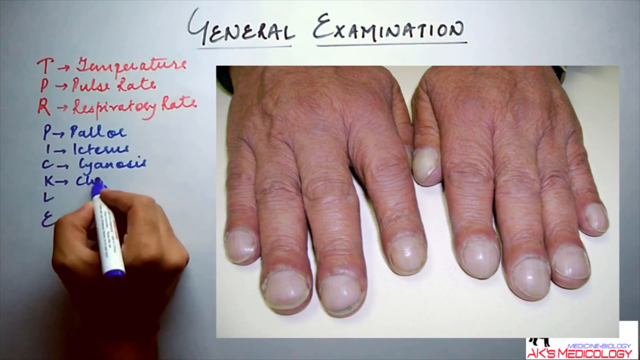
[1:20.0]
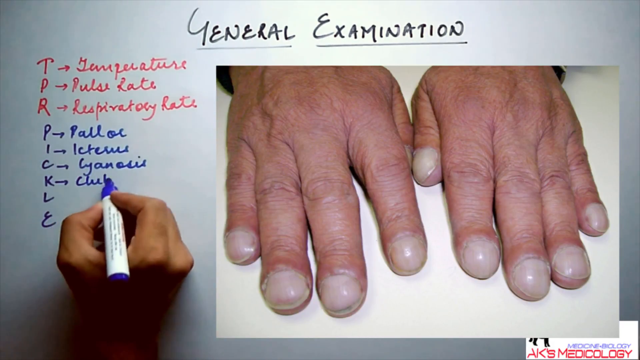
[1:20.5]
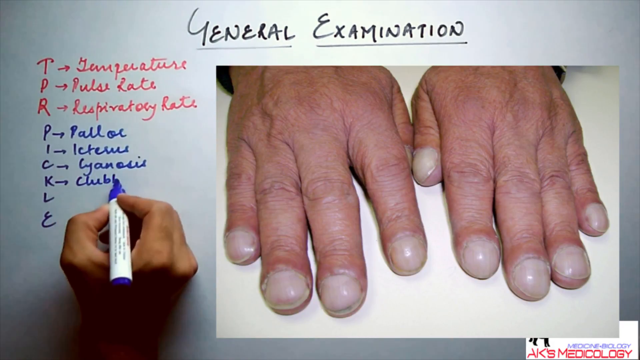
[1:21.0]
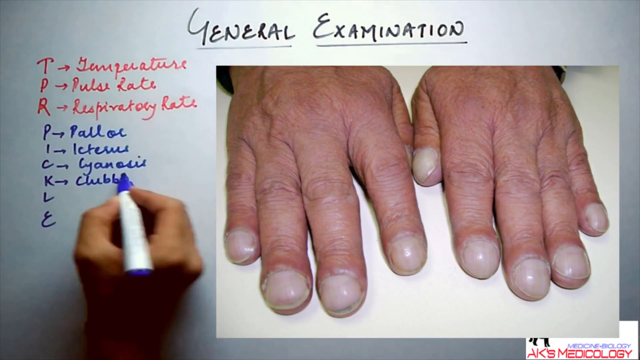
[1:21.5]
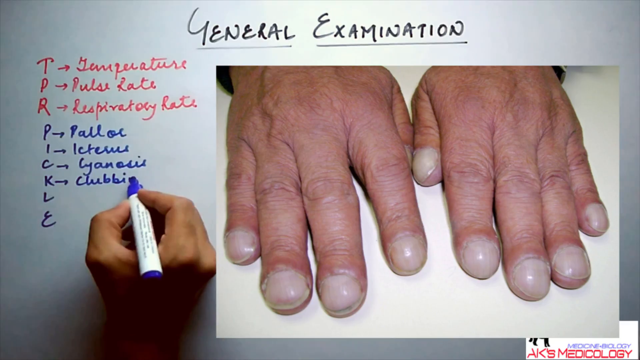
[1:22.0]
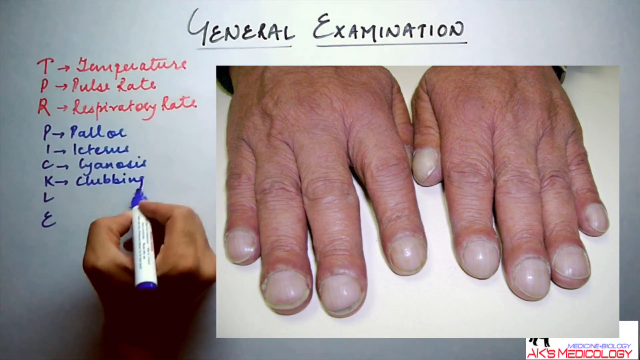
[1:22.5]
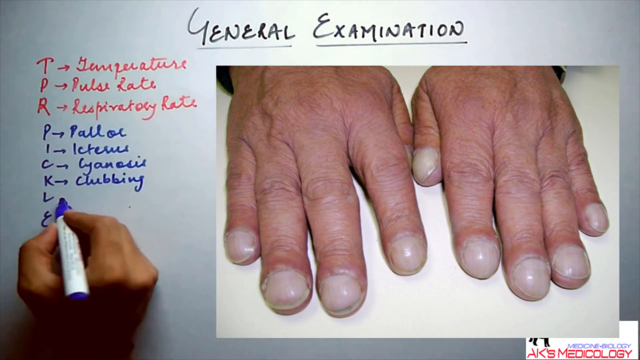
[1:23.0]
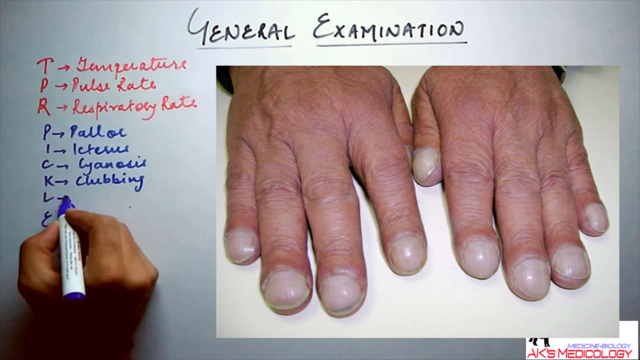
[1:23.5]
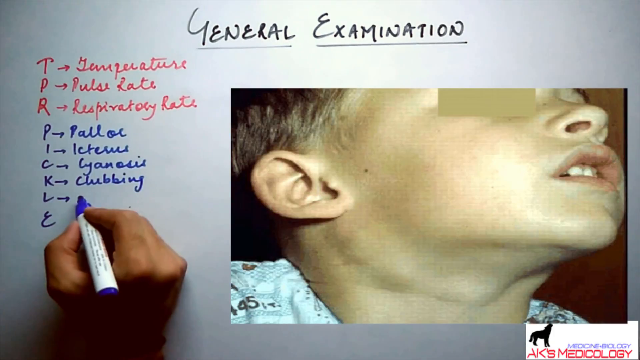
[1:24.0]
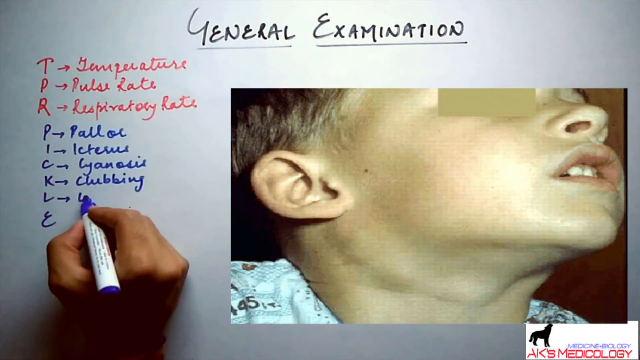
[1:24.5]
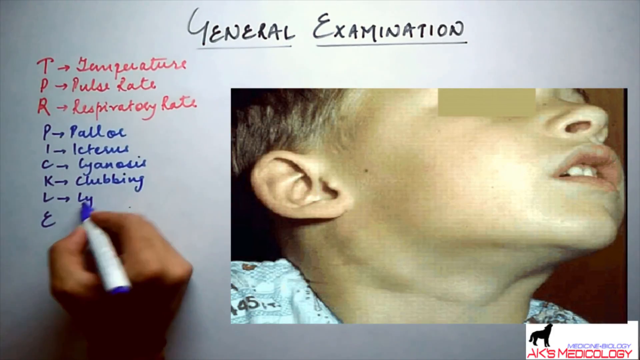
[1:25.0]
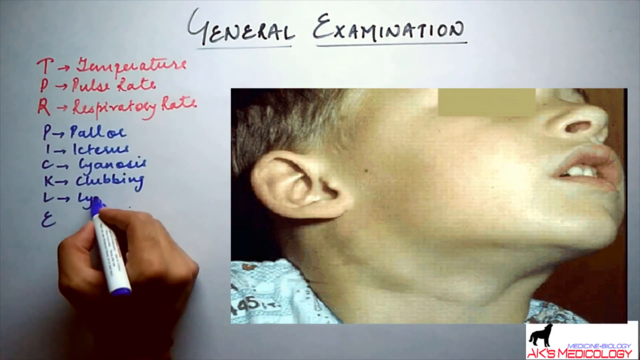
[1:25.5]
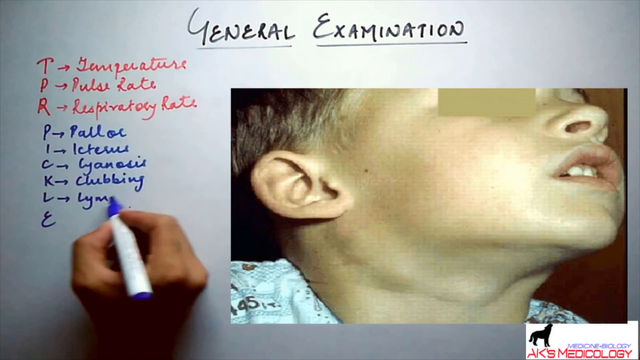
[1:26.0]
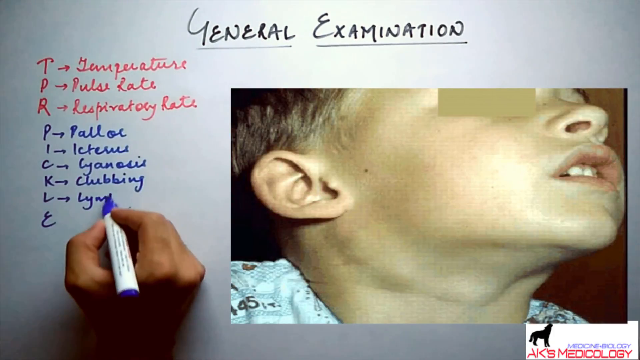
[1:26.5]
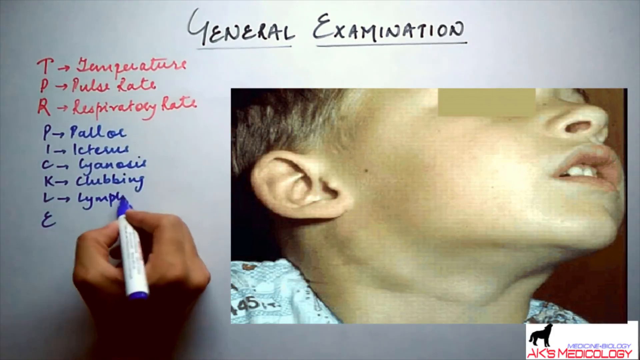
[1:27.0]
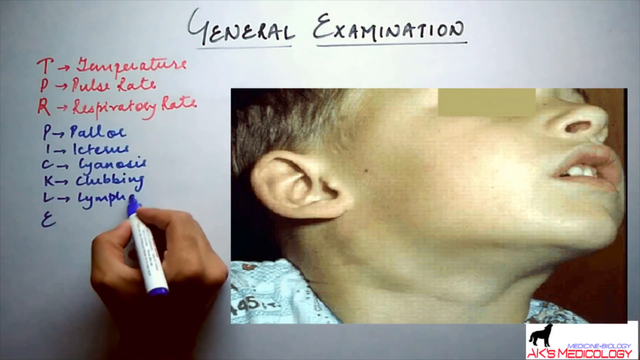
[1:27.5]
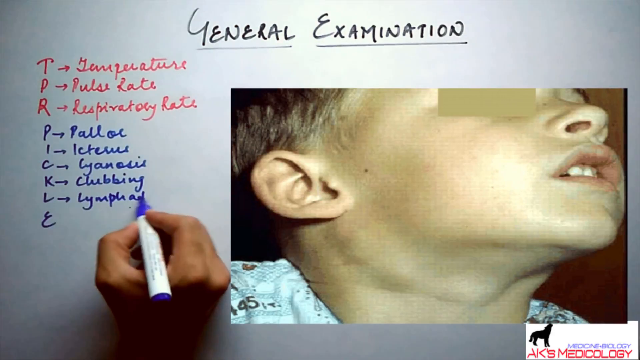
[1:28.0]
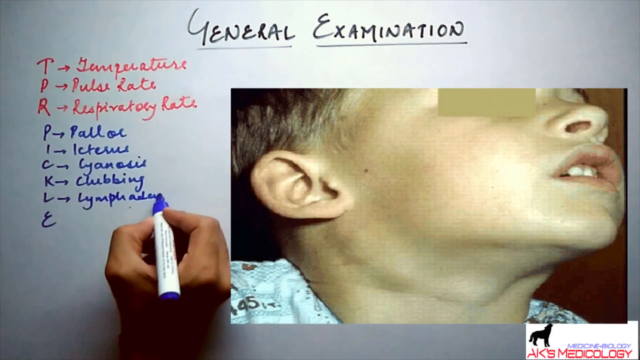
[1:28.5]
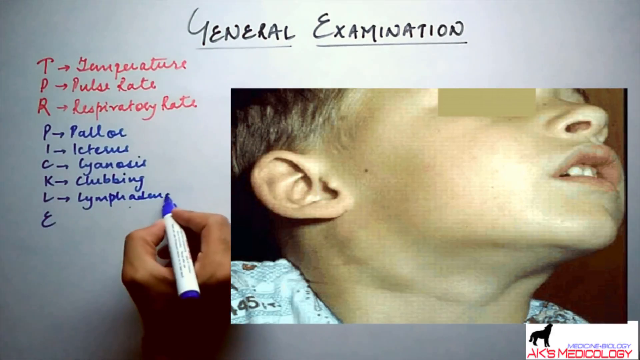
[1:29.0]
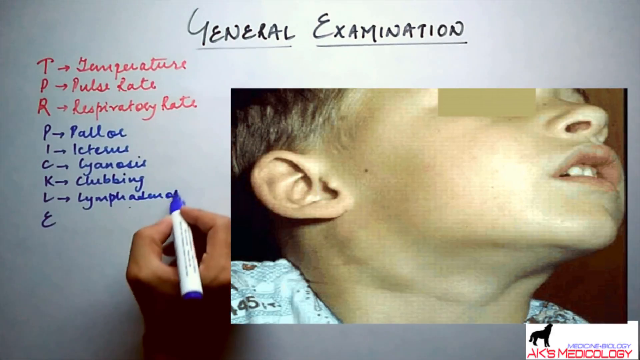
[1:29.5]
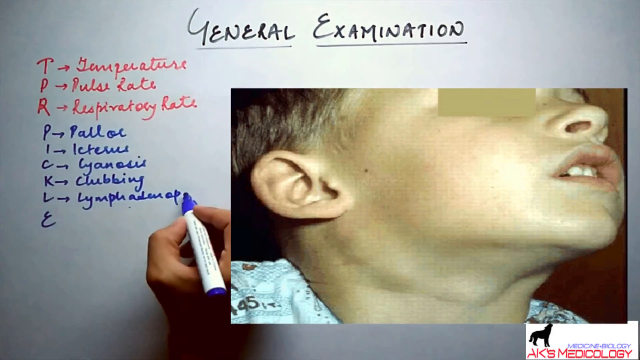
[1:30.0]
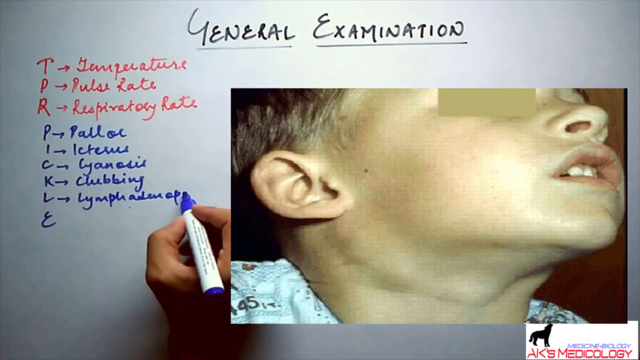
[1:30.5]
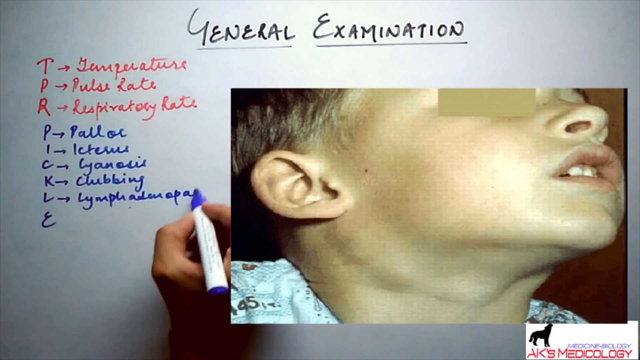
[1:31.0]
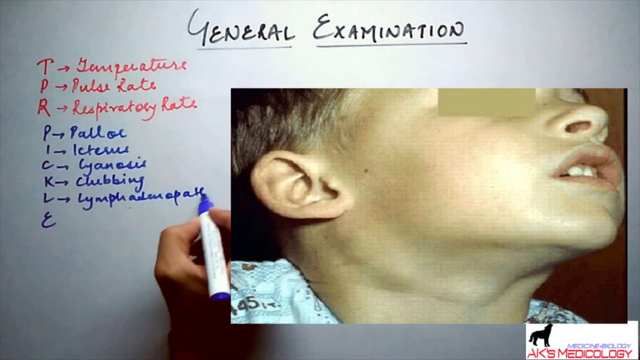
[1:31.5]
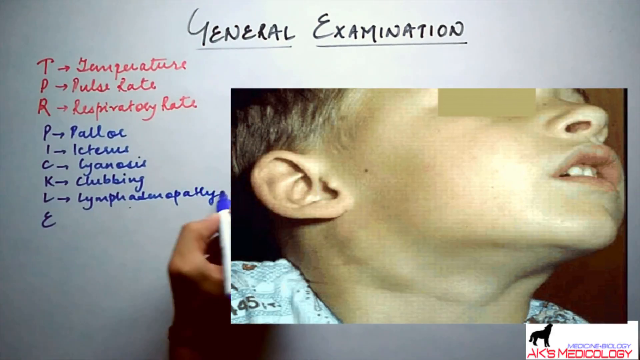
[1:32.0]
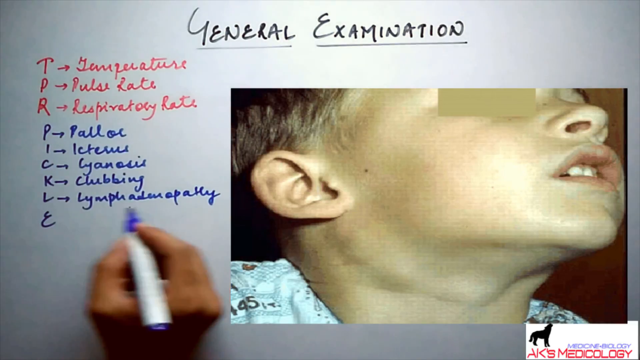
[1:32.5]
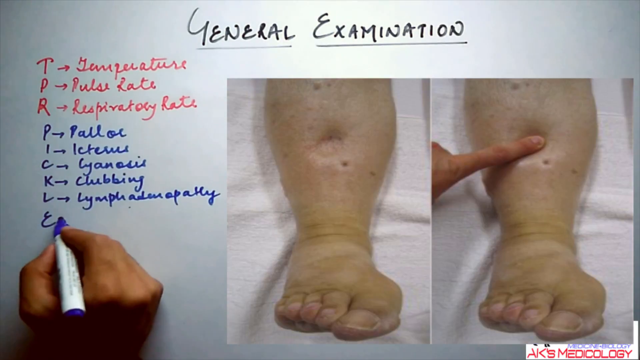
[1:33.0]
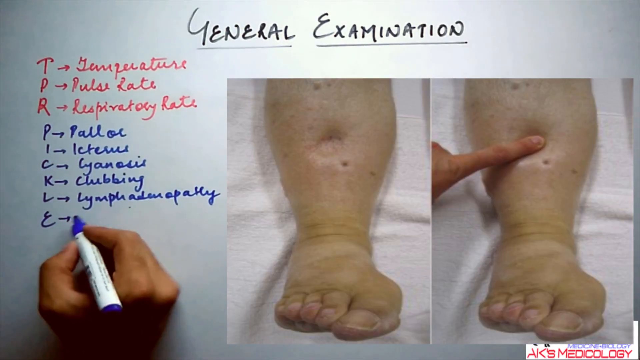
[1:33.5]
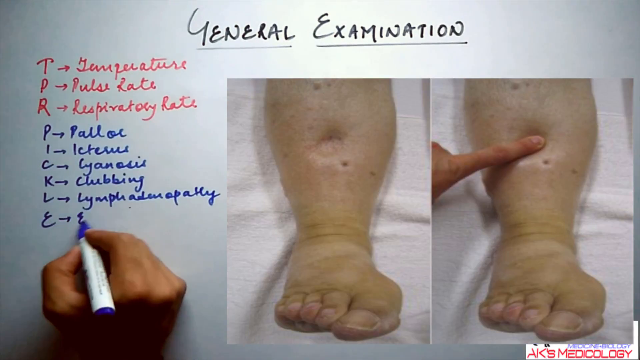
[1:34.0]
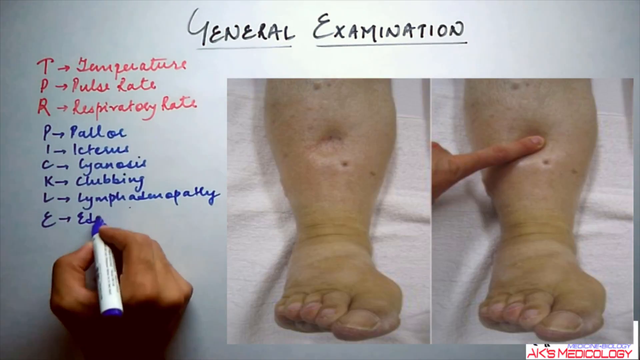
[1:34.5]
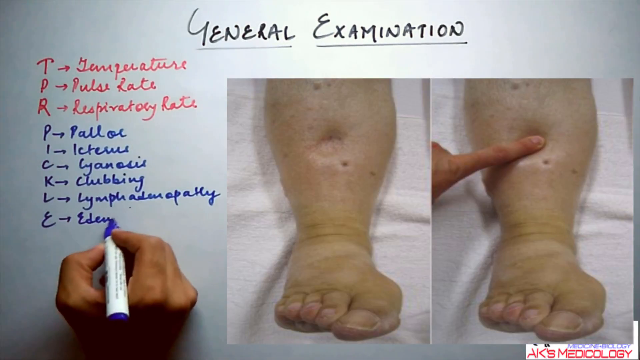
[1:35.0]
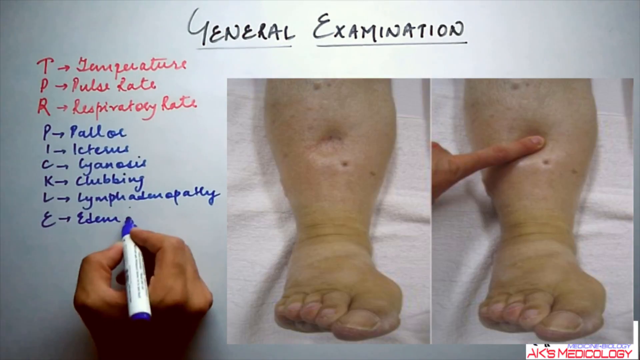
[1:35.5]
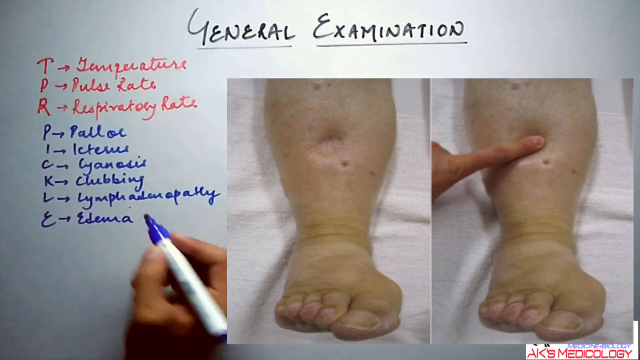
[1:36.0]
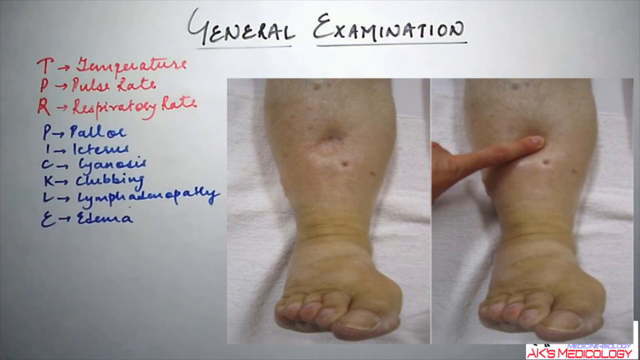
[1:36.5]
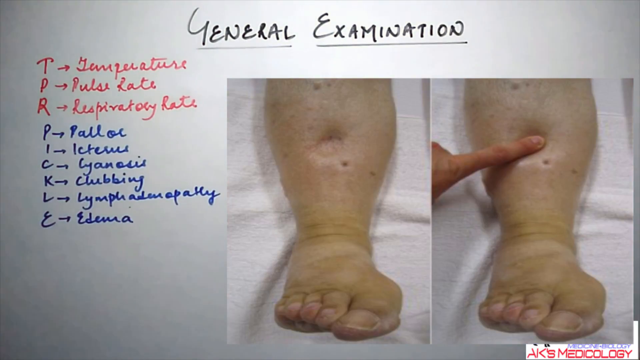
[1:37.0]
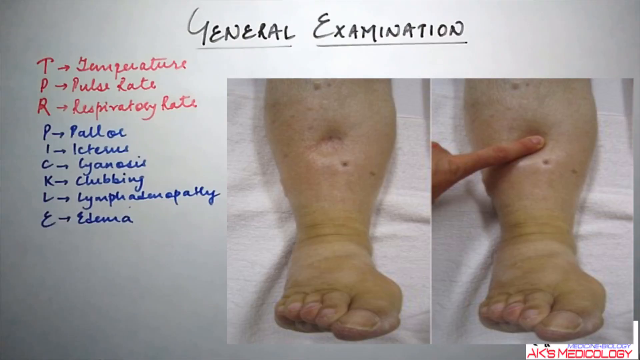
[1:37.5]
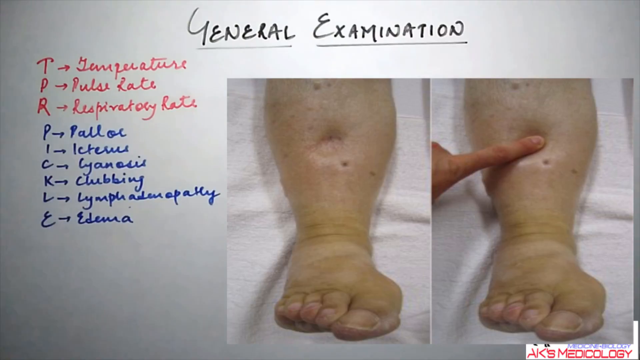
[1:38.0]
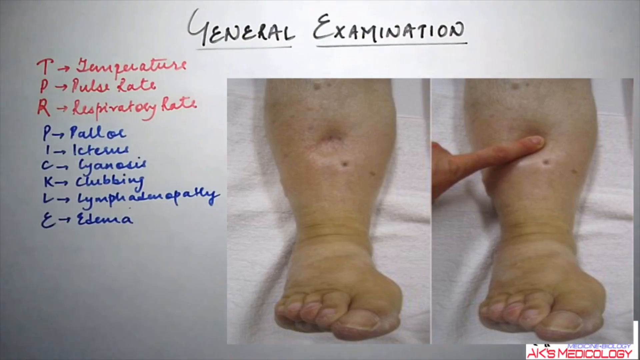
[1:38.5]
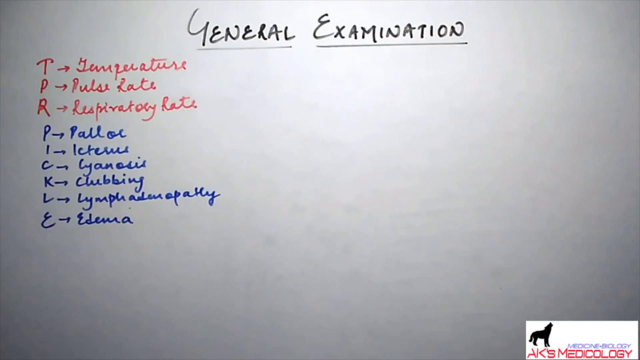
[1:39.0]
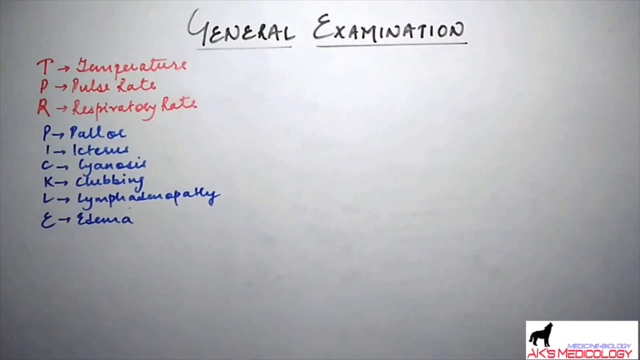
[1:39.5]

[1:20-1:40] The white board shows "general examination" with TPR in red: T for temperature, P for pulse rate and R for respiratory rate. Blue letters spell out "pickle." A slideshow shows a pair of hands with enlarged fingernails. Then a picture of a child appears, and the person writes "lymph nodes" by the letter L; the child's lymph nodes seem to be enlarged. A picture of two legs with rashes on them appears, and the word "edema" is written by the letter E, describing the condition shown.